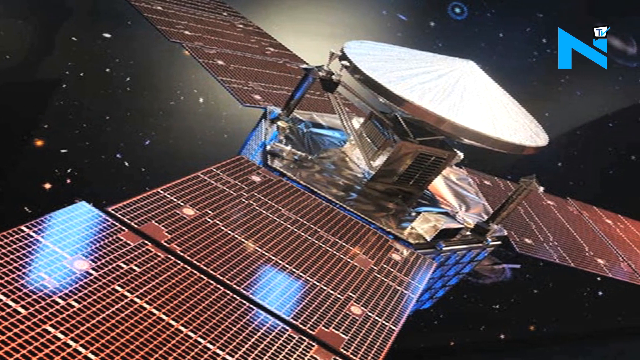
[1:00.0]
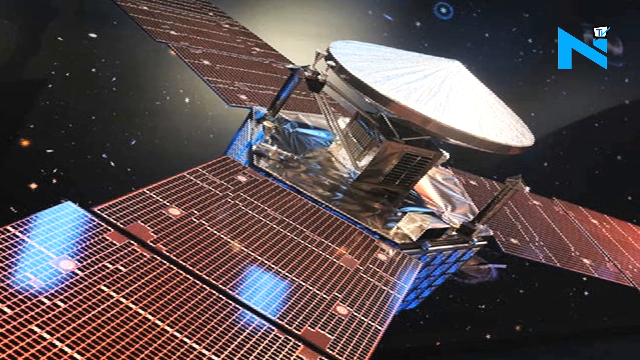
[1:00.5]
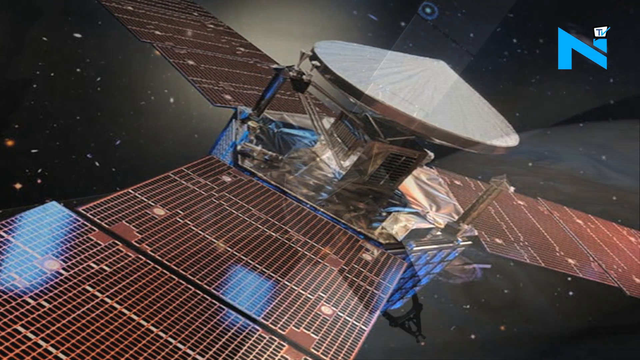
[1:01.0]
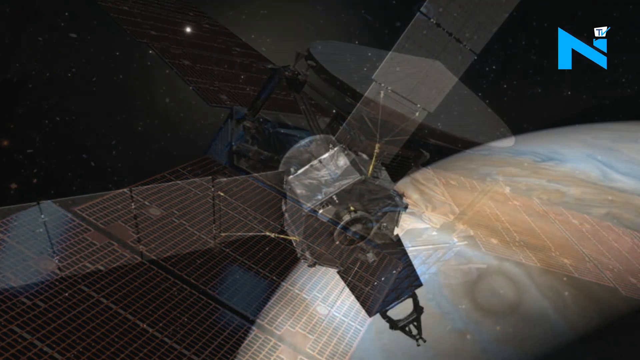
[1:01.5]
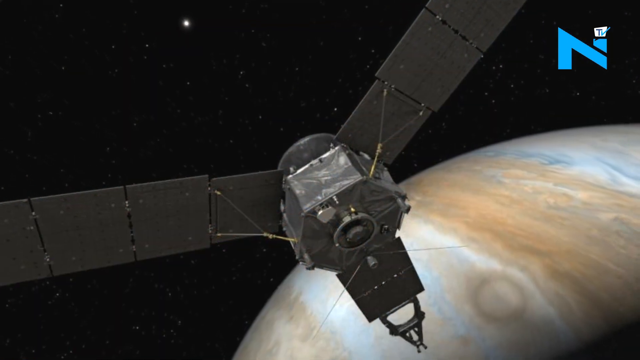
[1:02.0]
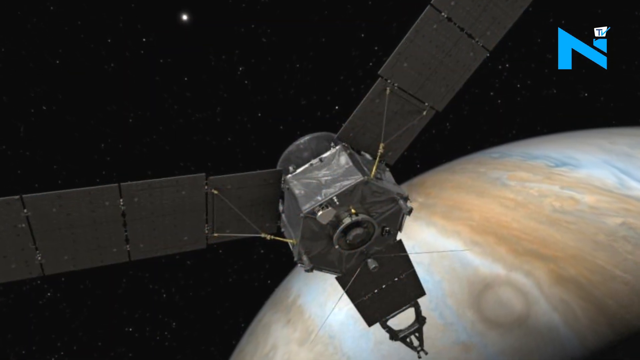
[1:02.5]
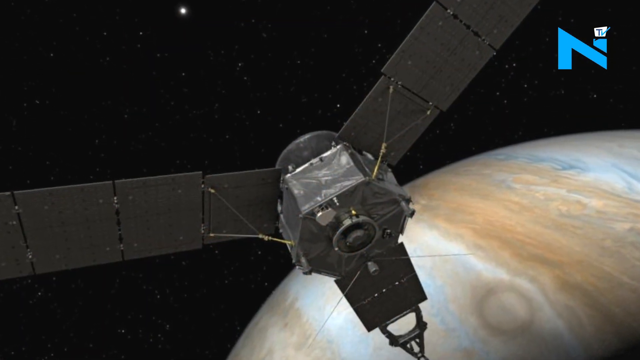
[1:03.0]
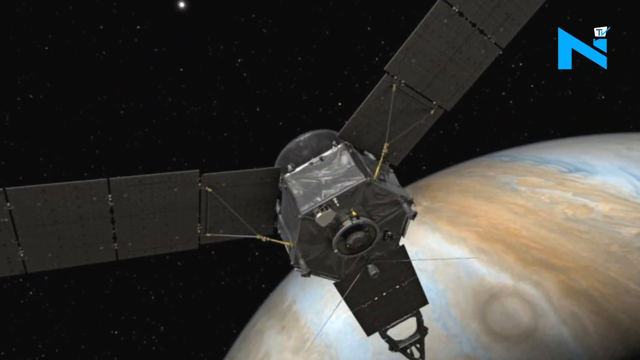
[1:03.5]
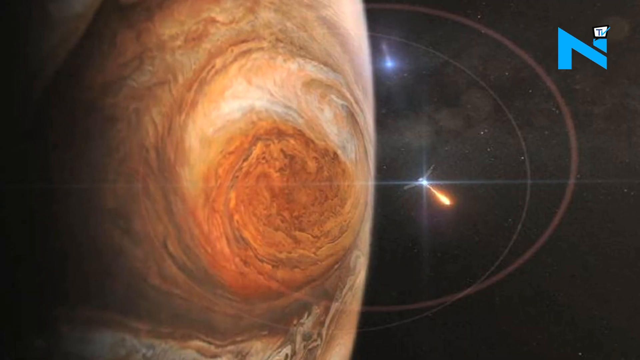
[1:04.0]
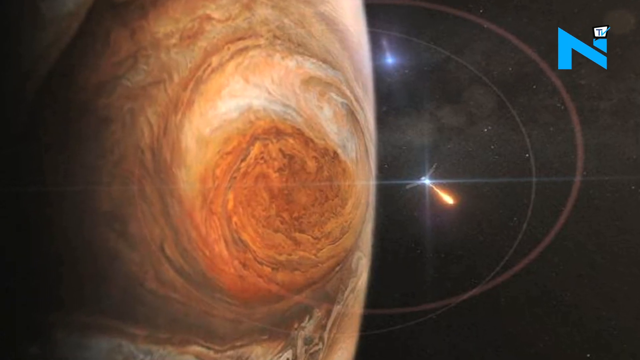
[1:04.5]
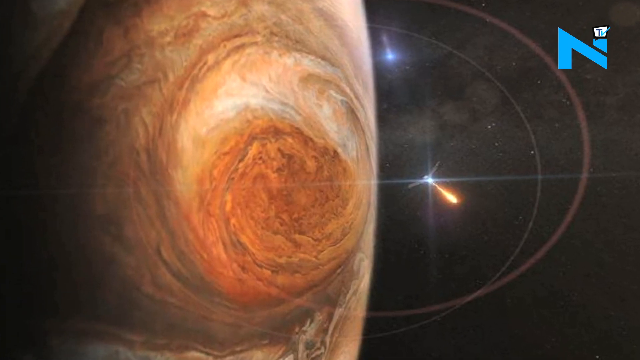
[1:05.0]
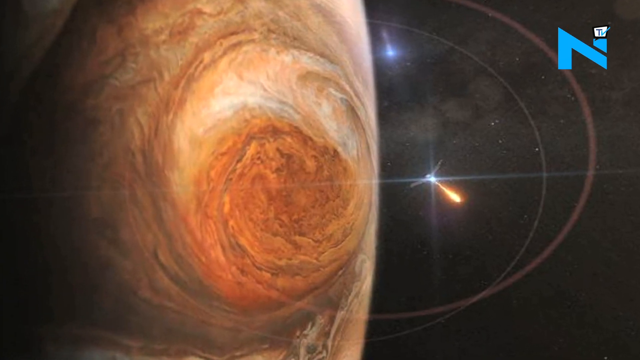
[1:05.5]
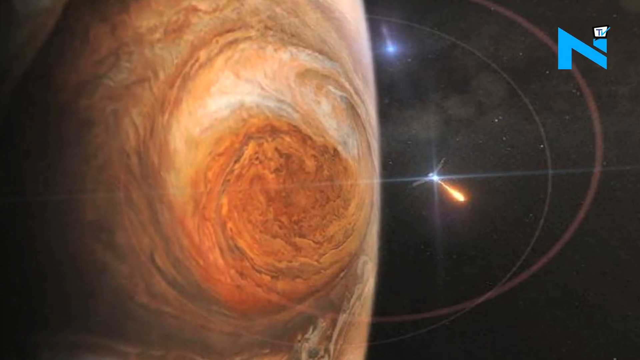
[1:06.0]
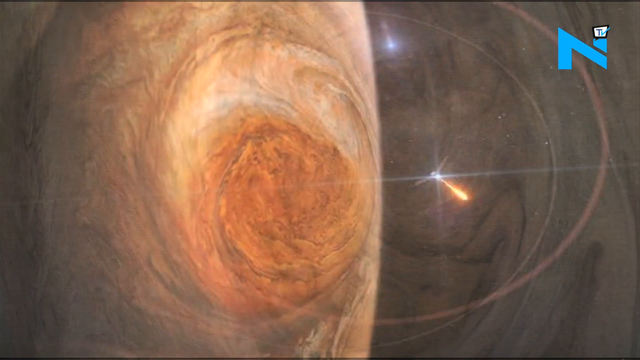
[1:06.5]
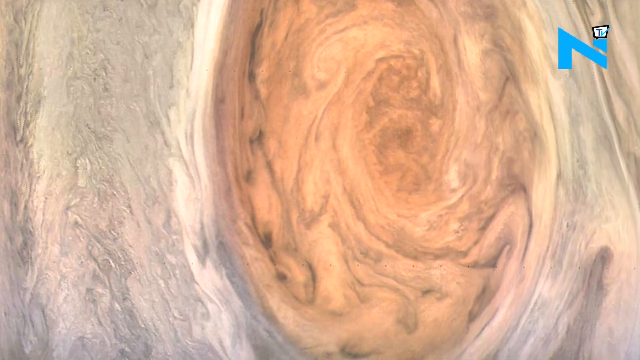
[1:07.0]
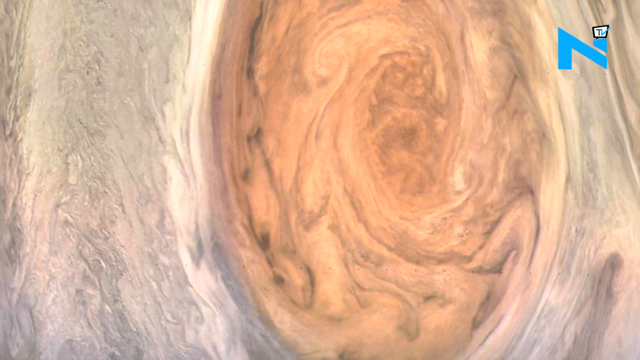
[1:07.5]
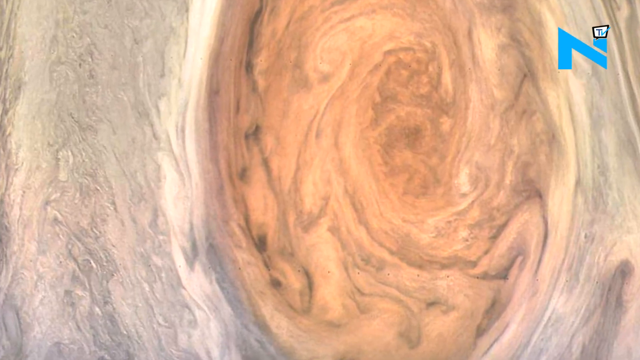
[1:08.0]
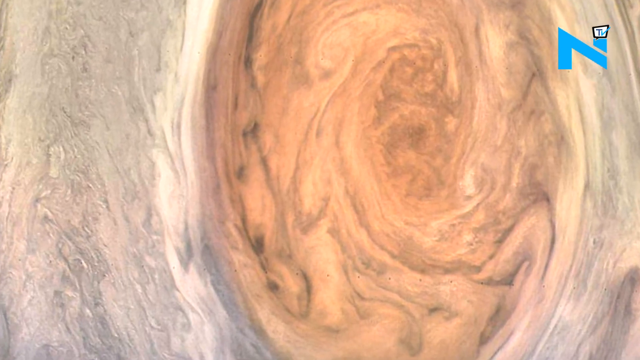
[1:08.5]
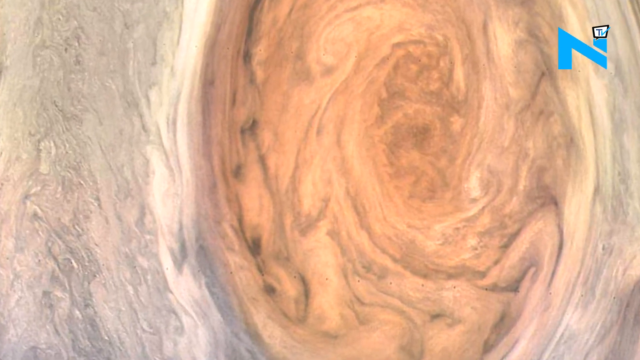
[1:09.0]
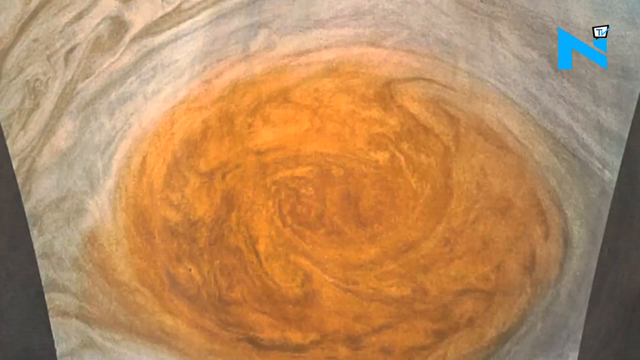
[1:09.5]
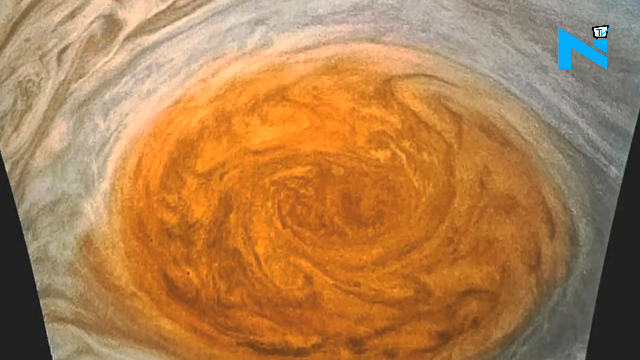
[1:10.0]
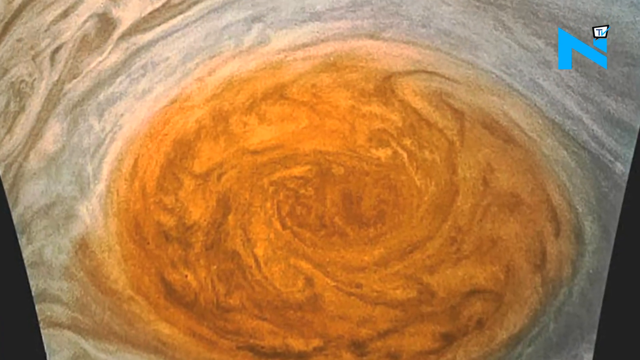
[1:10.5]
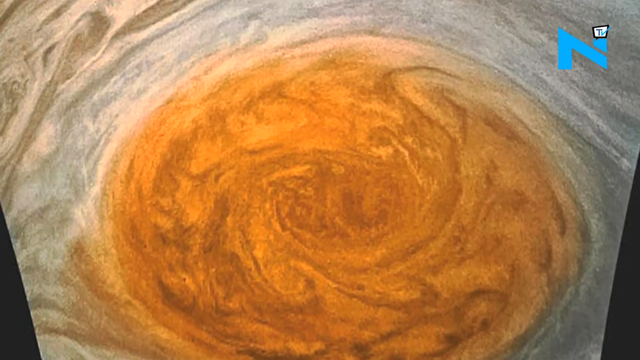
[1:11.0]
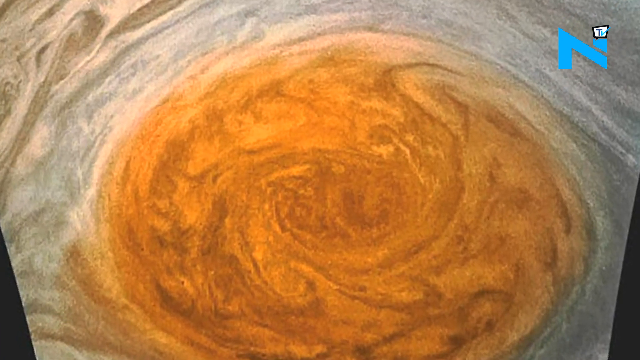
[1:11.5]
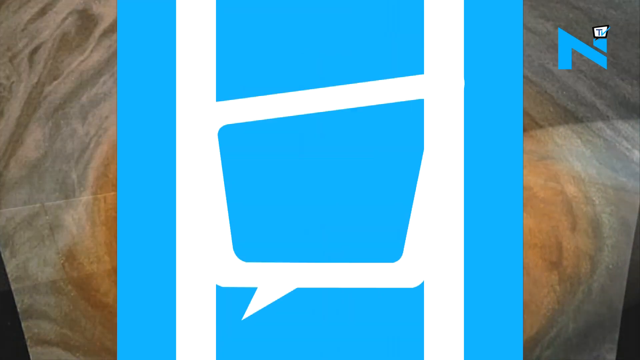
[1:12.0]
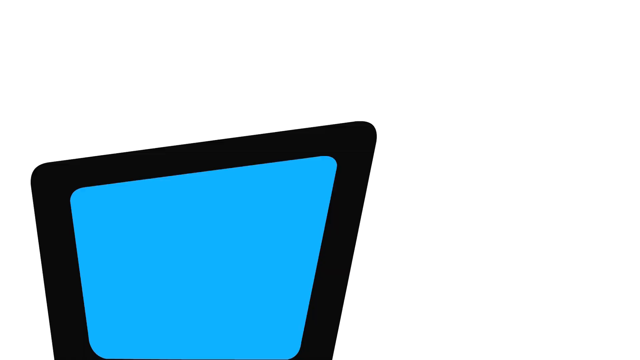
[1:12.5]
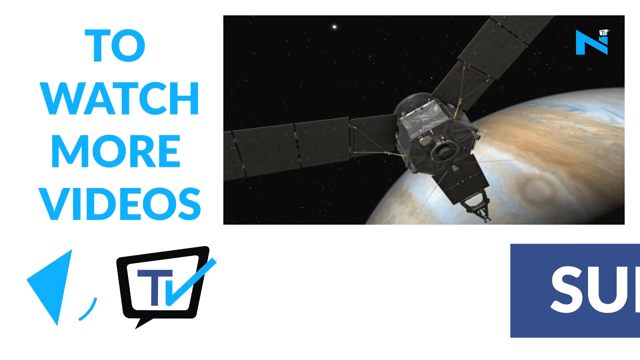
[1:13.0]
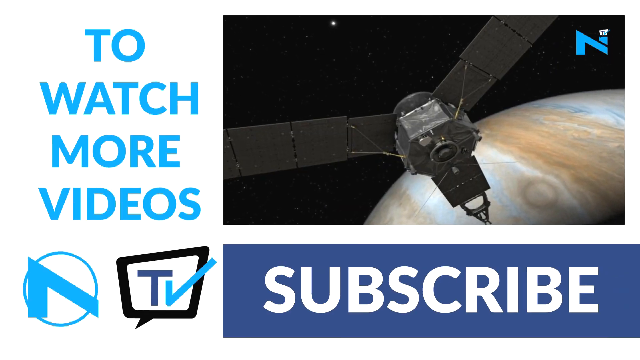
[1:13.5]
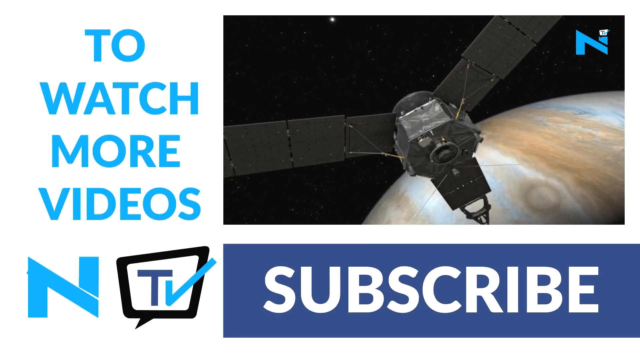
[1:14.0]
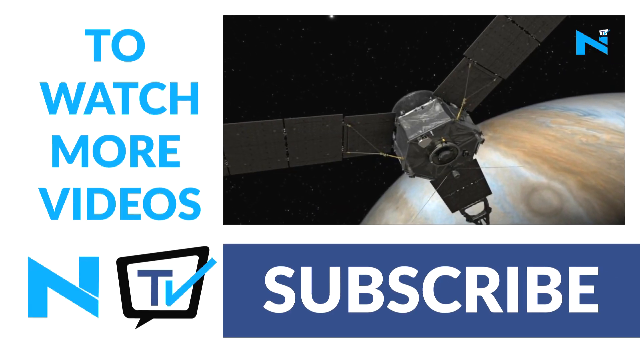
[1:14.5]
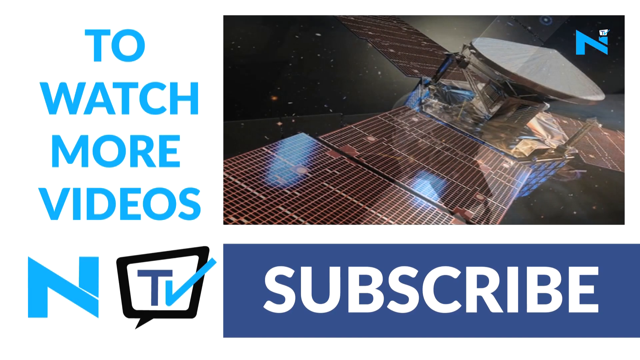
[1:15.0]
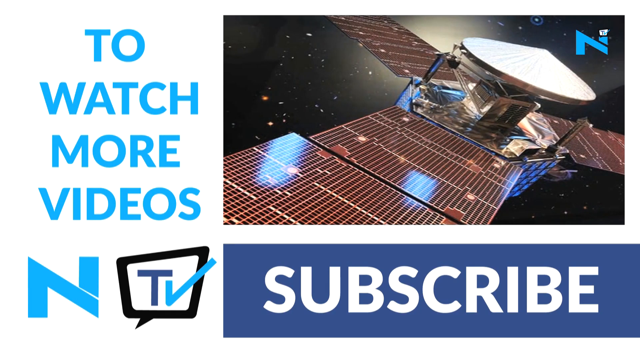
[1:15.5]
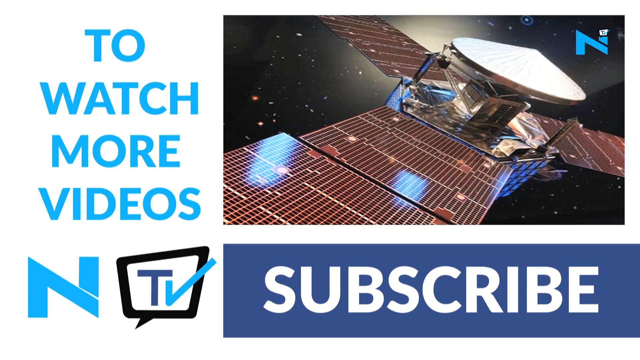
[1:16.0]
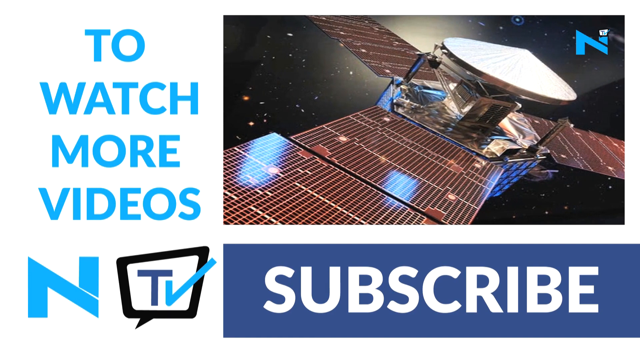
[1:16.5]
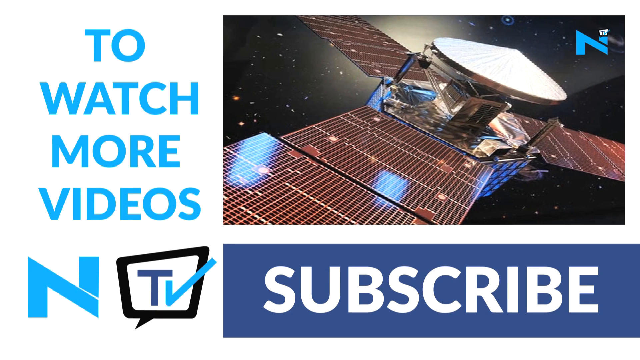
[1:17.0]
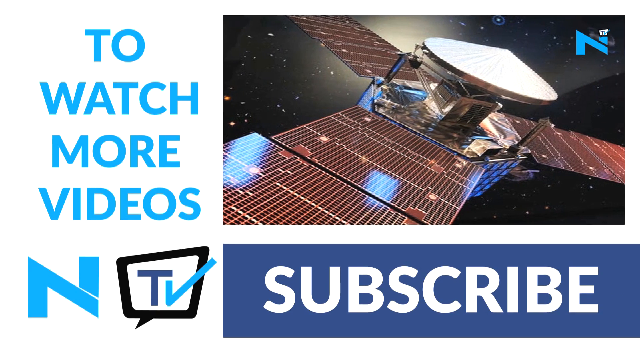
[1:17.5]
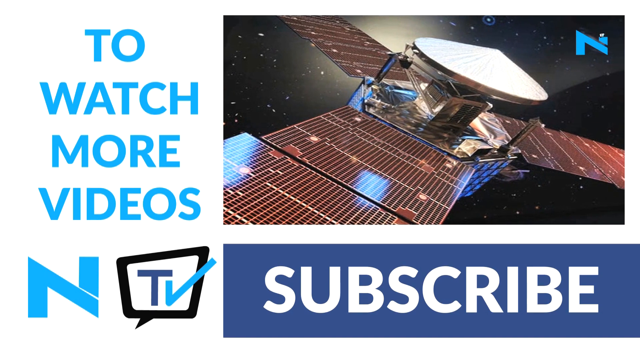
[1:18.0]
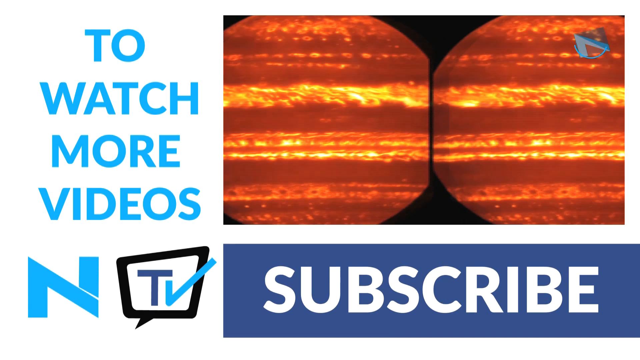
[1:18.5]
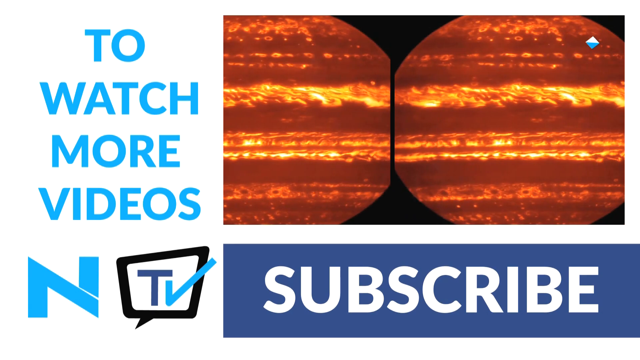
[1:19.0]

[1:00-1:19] Images show the satellite, which has three wings, in close-up detail. The wings look like they are made of copper, with a metallic copper shade. Next, another image shows the satellite from behind, flying over the curvature of the planet Jupiter. In the background is deep, dark space, with a star shining in the distance. The camera pans closer to another view of the satellite, which looks like a tiny insect because of the size difference between it and the large curvature of the planet. Panning closer reveals another view of the planet's surface, with the landmass looking like swirls of orange surrounded by gray. As the video ends, a subscribe button appears at the bottom of the screen with the word "subscribe" in white text on a blue background.